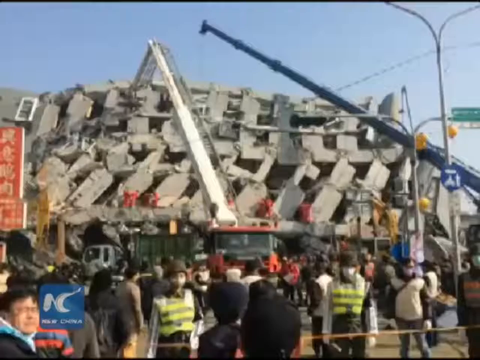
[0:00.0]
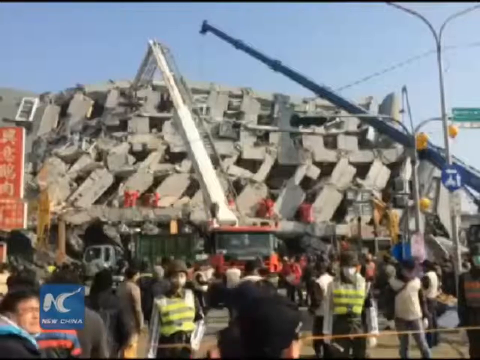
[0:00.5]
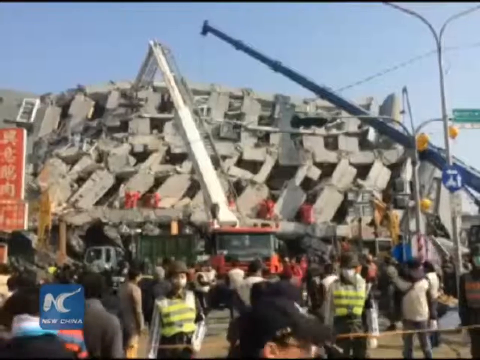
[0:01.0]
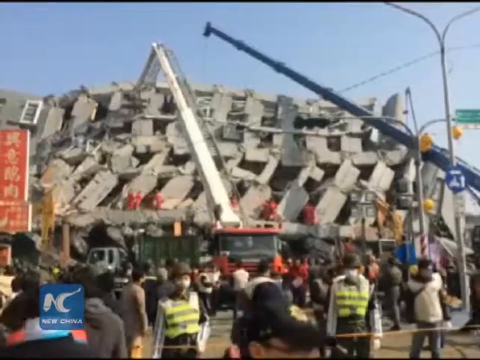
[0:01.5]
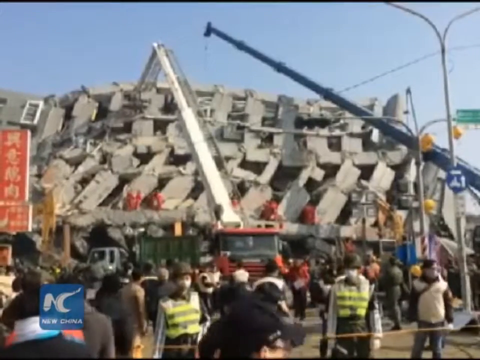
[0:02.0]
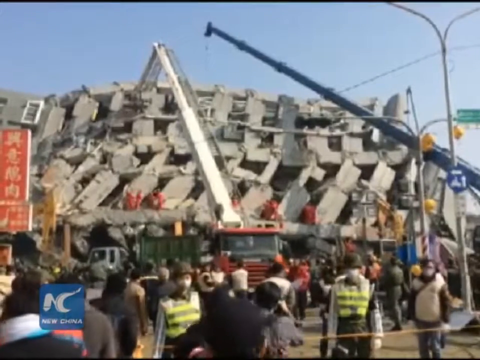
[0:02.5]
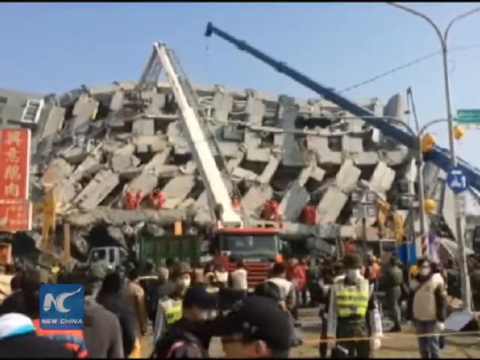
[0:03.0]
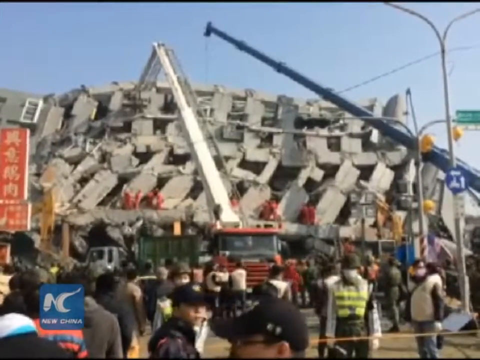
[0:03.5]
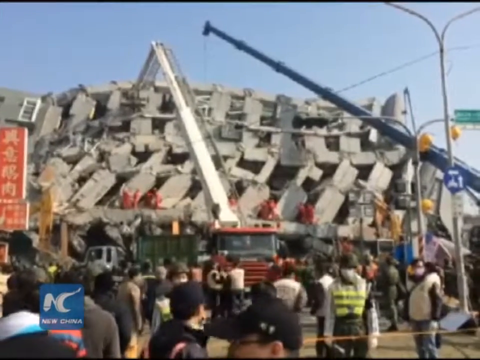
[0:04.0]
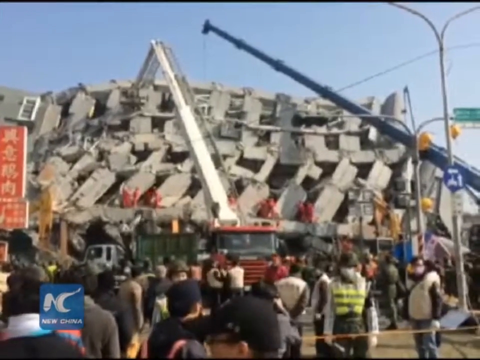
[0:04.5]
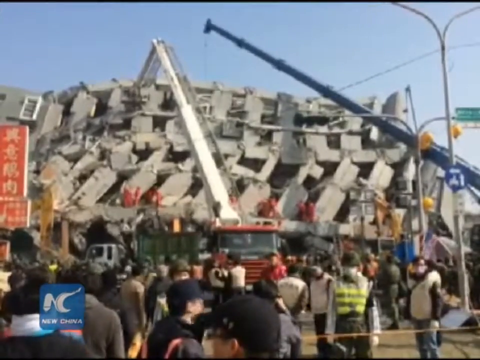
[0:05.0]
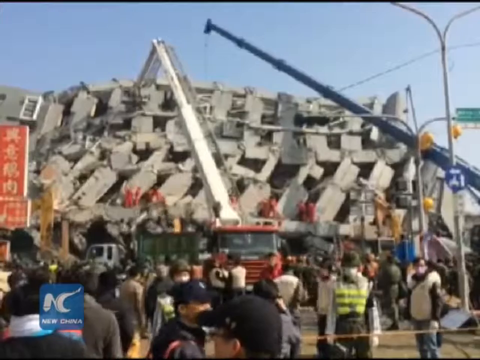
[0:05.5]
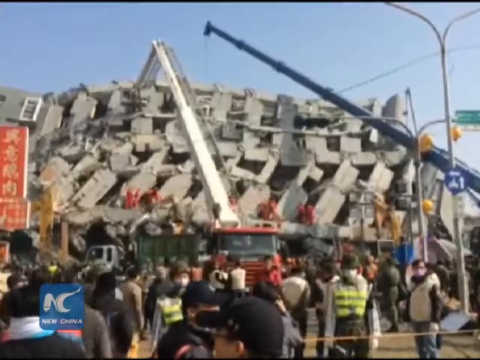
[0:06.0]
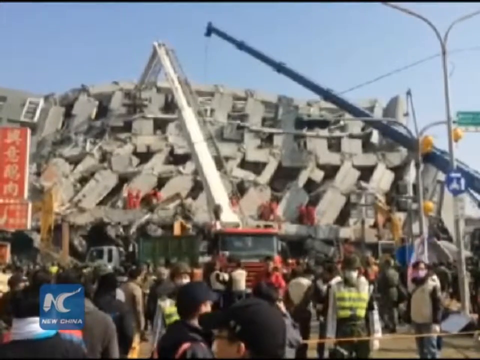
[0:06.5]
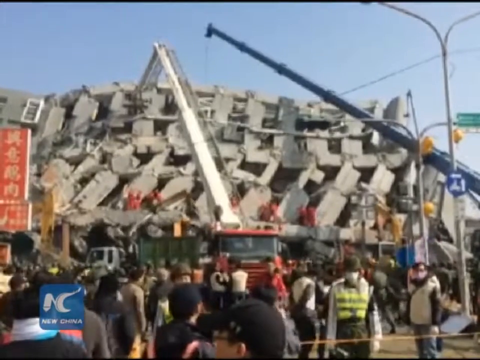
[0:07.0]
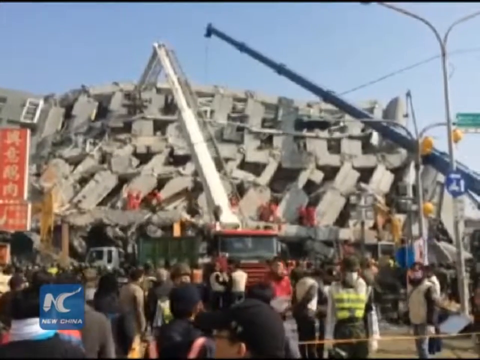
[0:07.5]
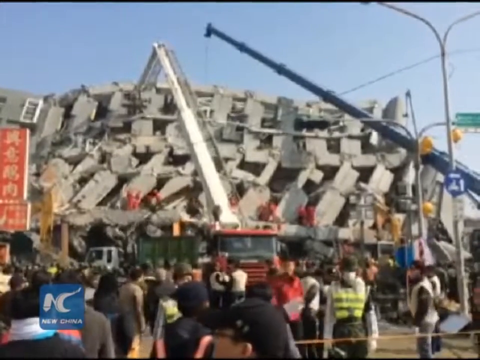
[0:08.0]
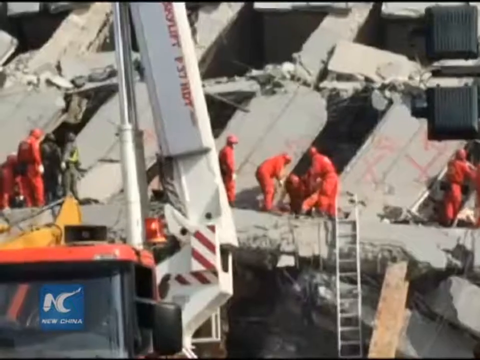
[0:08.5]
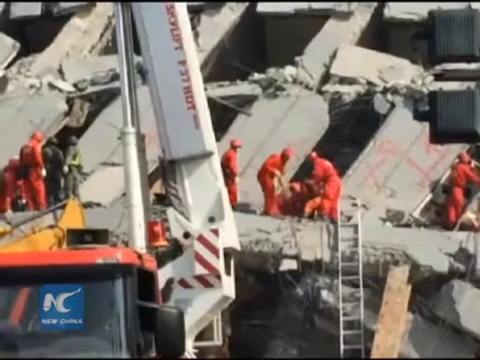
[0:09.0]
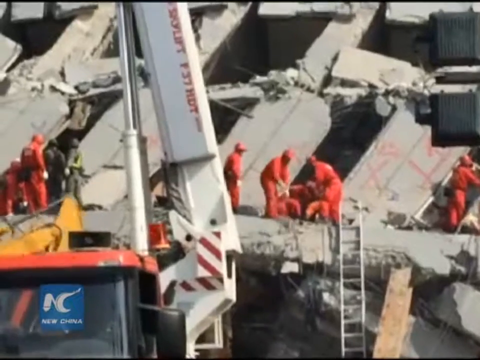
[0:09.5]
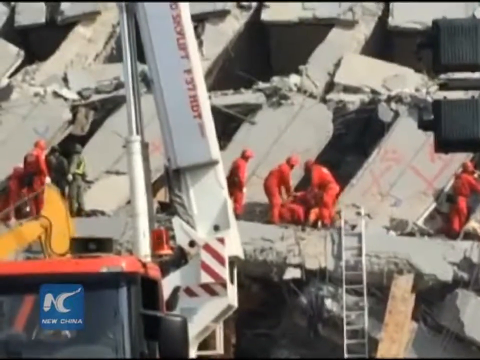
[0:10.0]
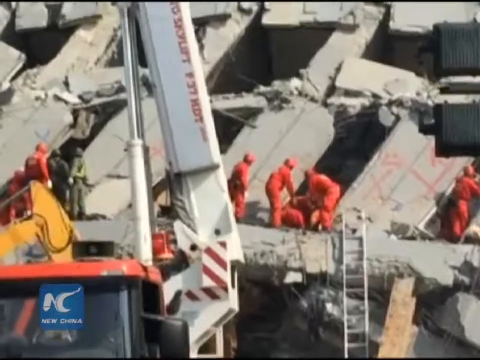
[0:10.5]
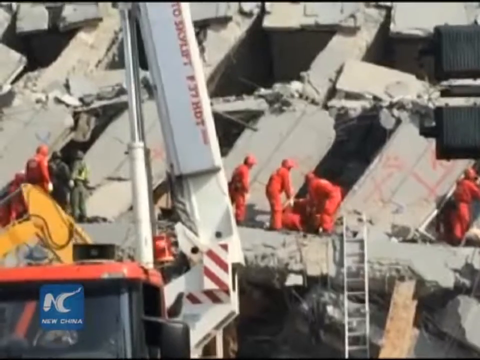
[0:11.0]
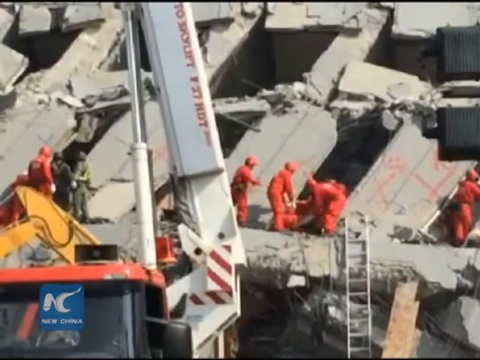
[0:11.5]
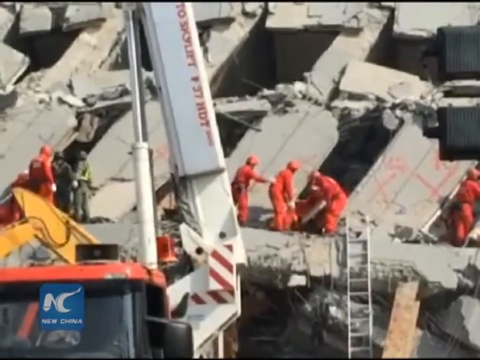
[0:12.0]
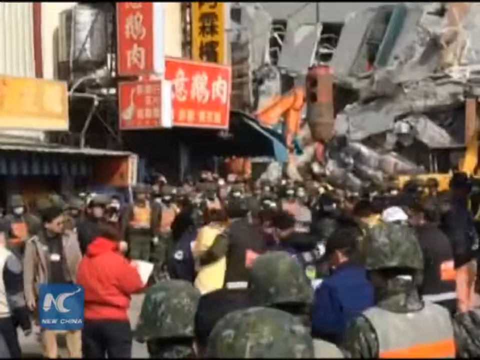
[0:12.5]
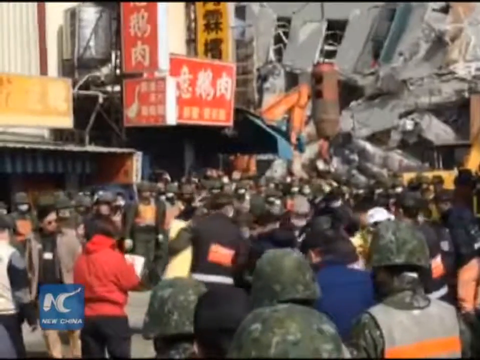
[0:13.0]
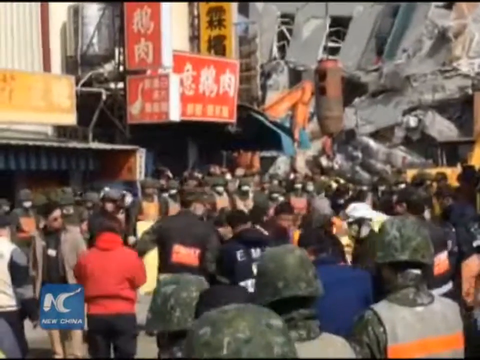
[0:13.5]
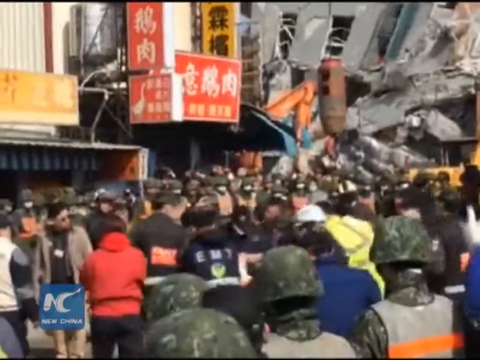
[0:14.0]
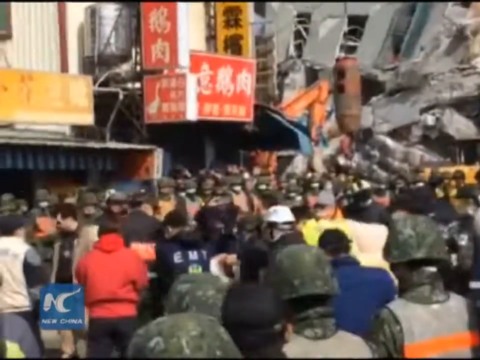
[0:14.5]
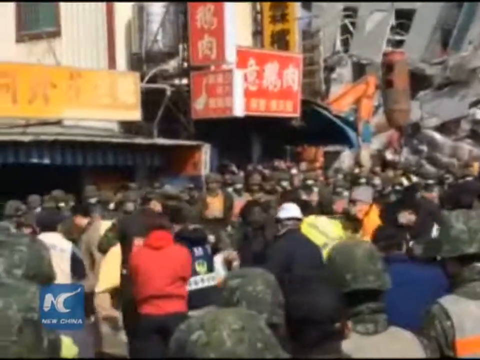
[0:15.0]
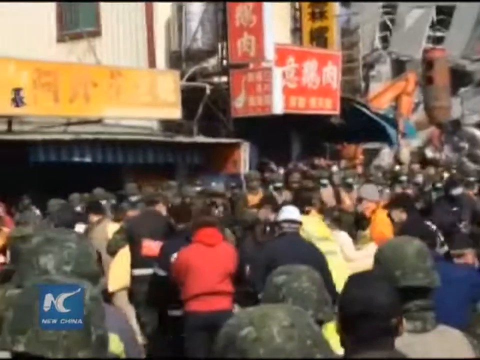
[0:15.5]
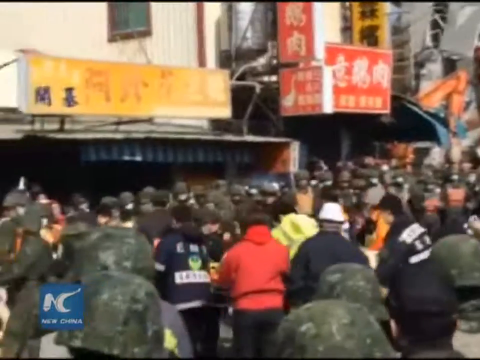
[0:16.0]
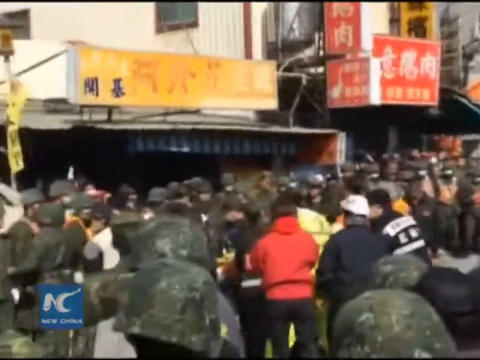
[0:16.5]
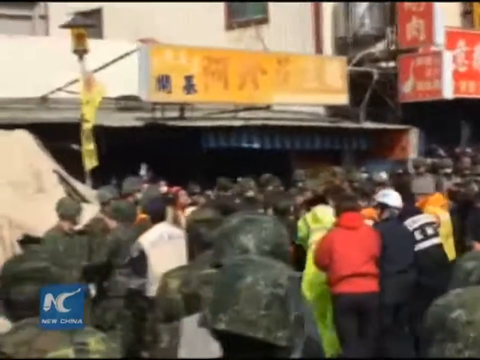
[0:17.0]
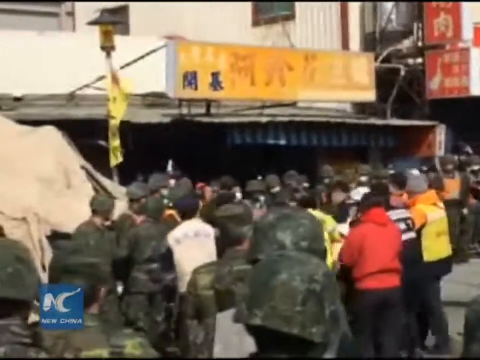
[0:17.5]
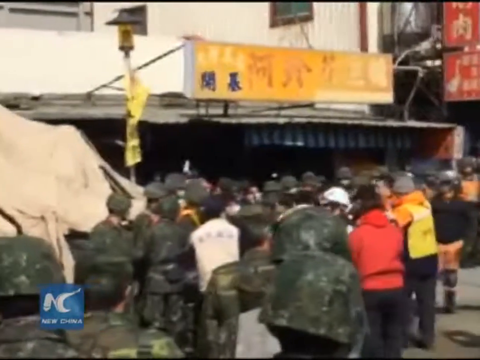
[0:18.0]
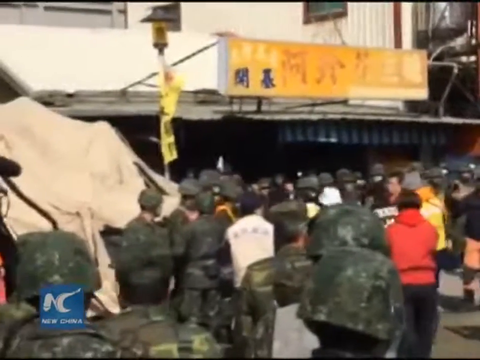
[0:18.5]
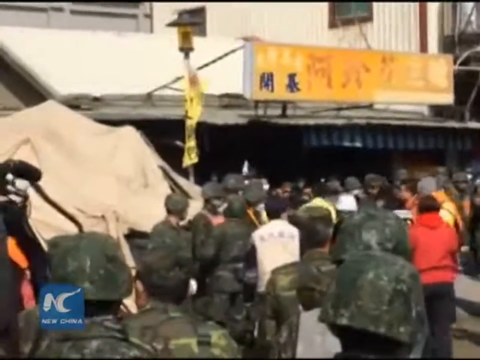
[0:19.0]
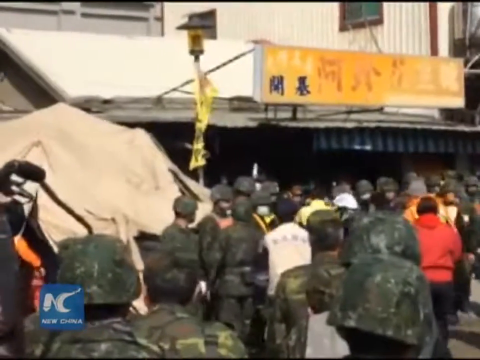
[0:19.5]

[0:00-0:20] A collapsed building appears, with some cranes standing beside it, probably to lift concrete rubble so the inside is more visible and accessible. Emergency responders in pink overalls and possibly pink helmets are trying to gain access to the building. Other emergency responders, not in pink, seem to be carrying somebody outside. A large crowd is gathered outside the building, and there seem to be some military officers at the scene, apparently in traditional camouflaged green uniforms. A channel logo is at the bottom left of the screen, suggesting the incident happened in China. The sky is clear blue, and the recording appears to have been made towards the evening. Some traffic lights are on the right side of the screen.